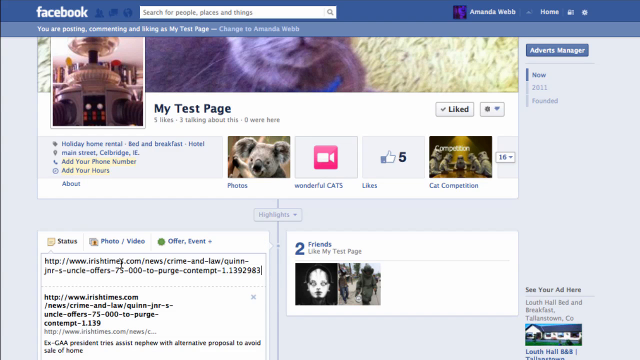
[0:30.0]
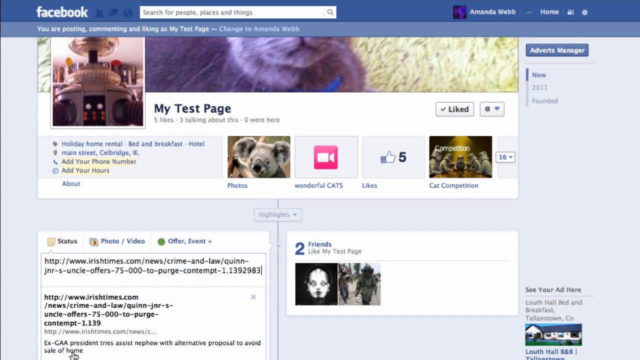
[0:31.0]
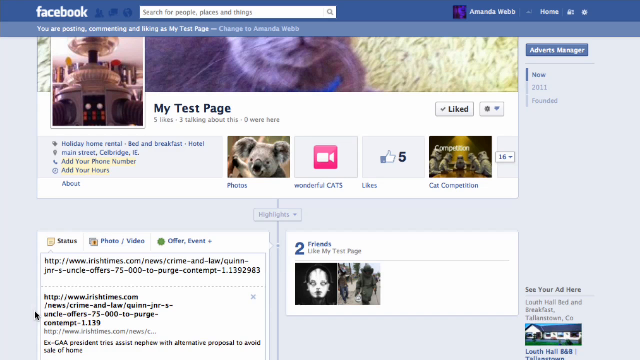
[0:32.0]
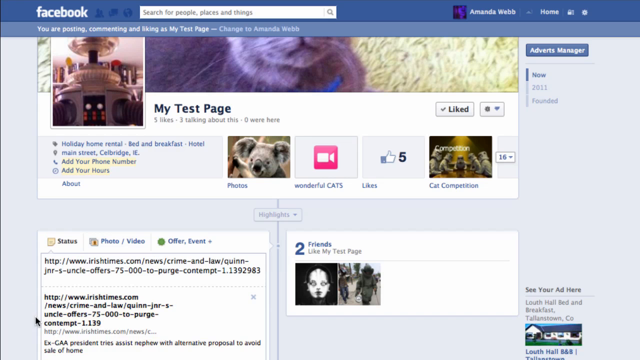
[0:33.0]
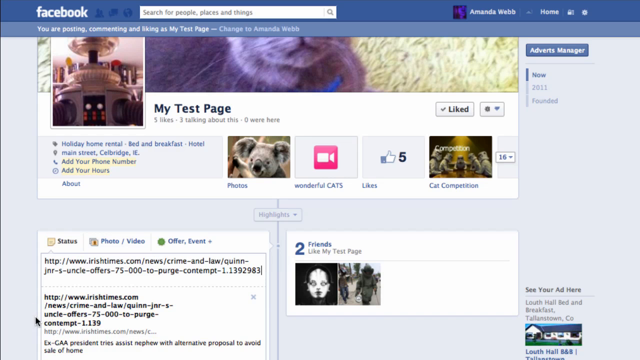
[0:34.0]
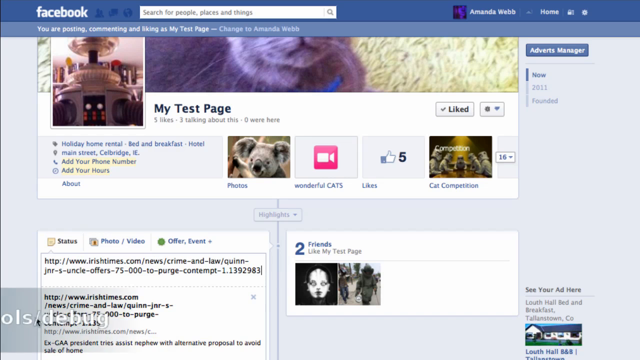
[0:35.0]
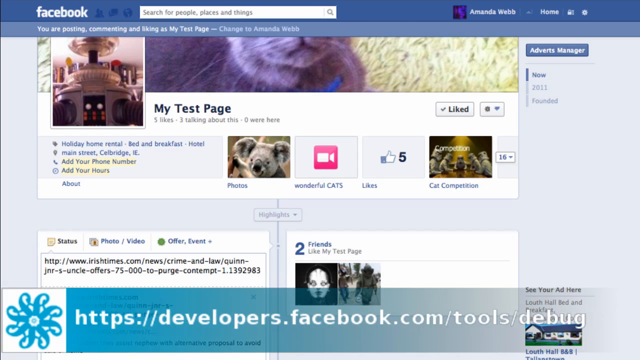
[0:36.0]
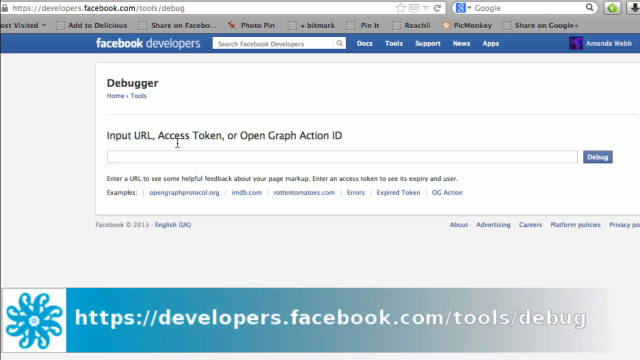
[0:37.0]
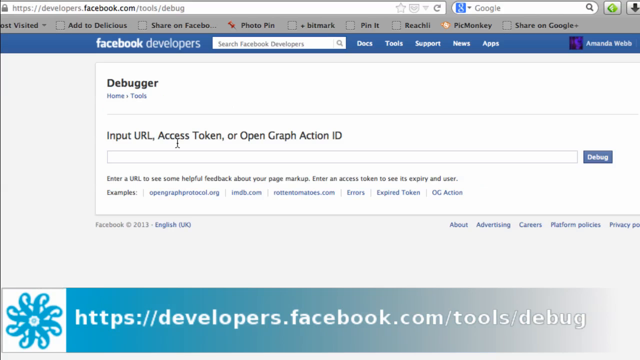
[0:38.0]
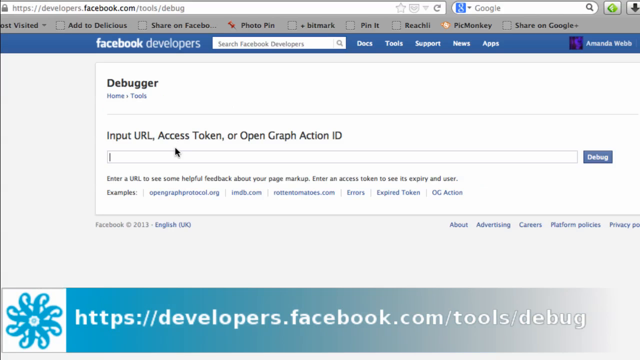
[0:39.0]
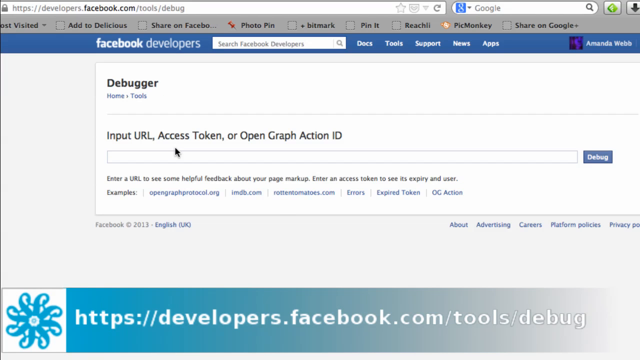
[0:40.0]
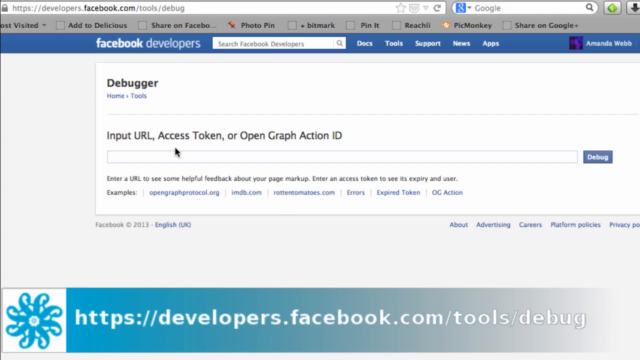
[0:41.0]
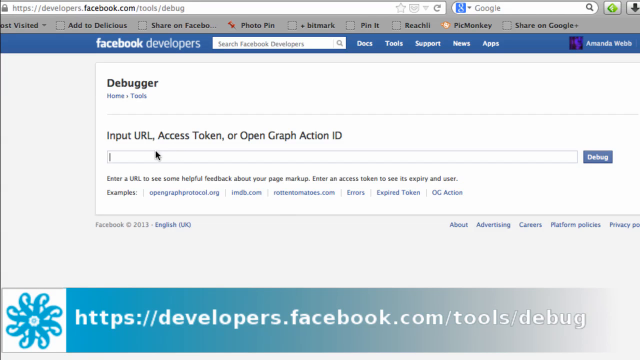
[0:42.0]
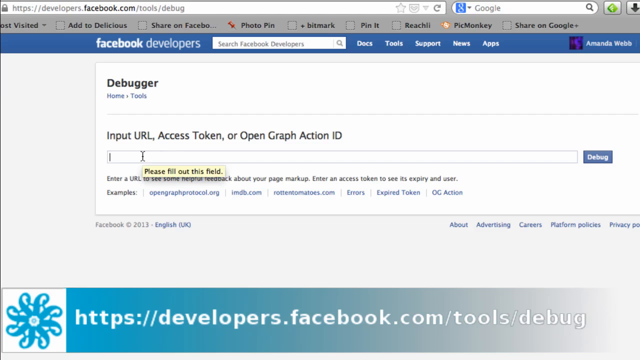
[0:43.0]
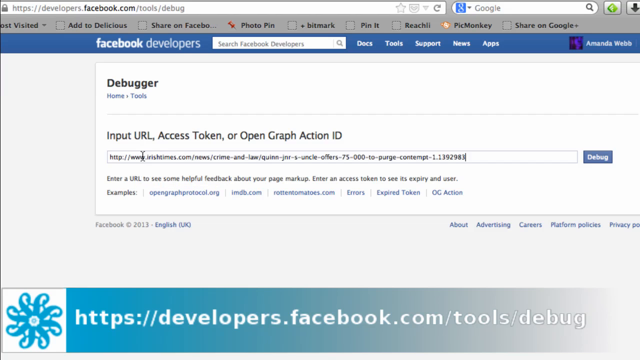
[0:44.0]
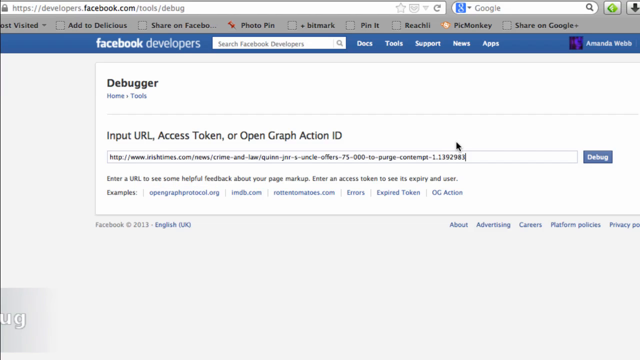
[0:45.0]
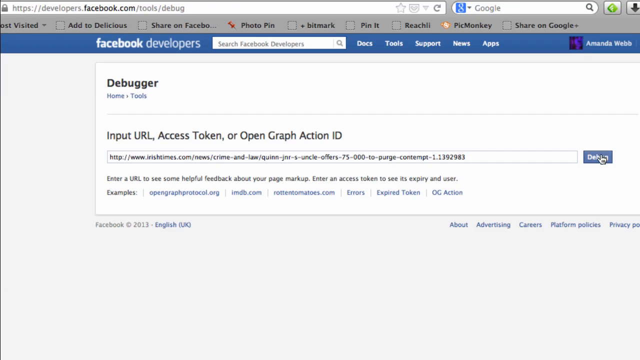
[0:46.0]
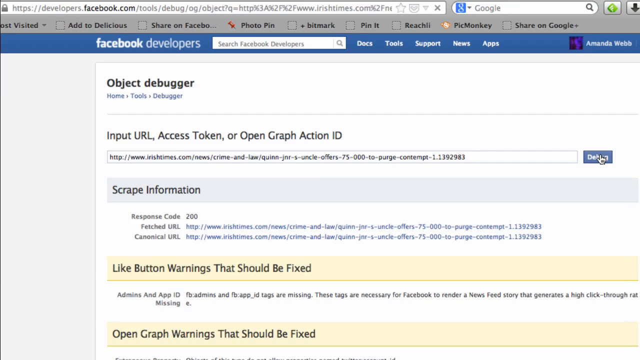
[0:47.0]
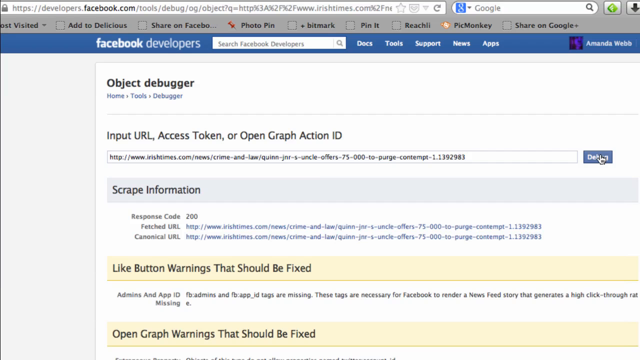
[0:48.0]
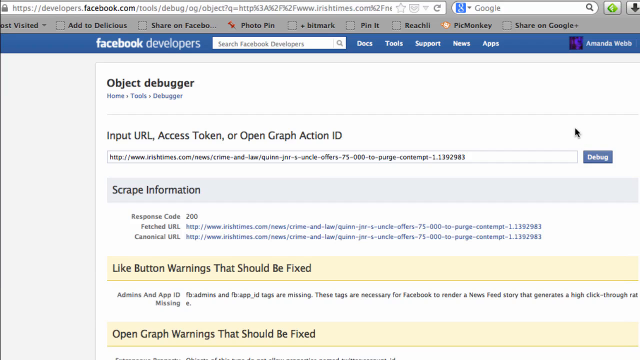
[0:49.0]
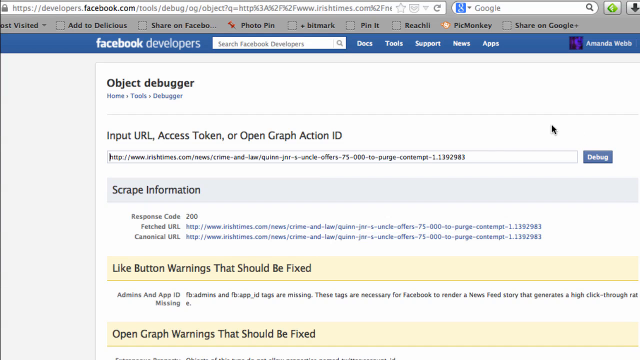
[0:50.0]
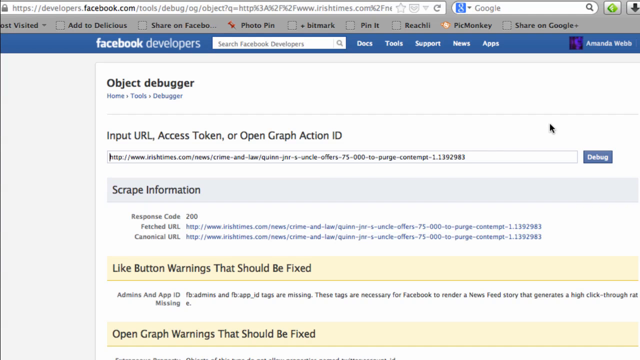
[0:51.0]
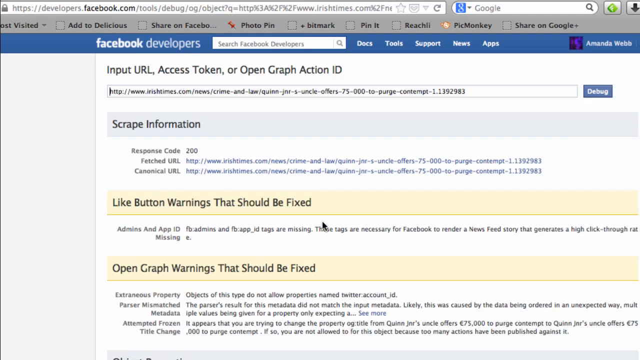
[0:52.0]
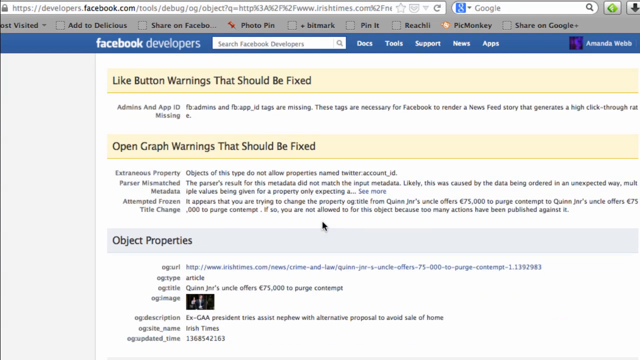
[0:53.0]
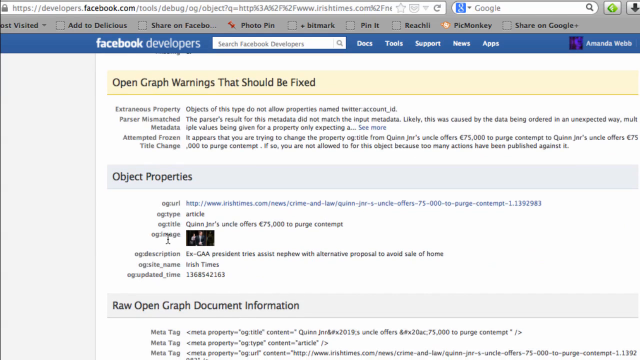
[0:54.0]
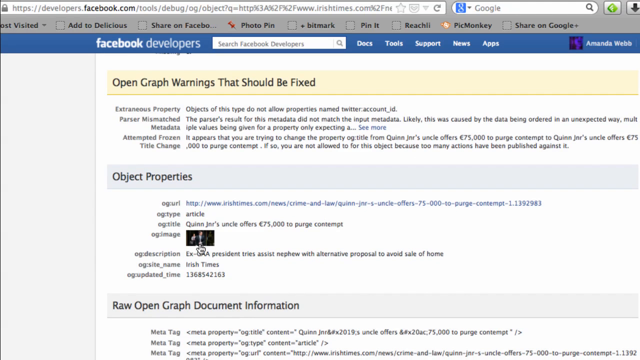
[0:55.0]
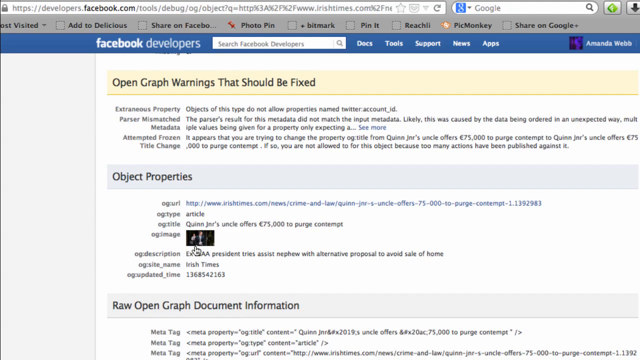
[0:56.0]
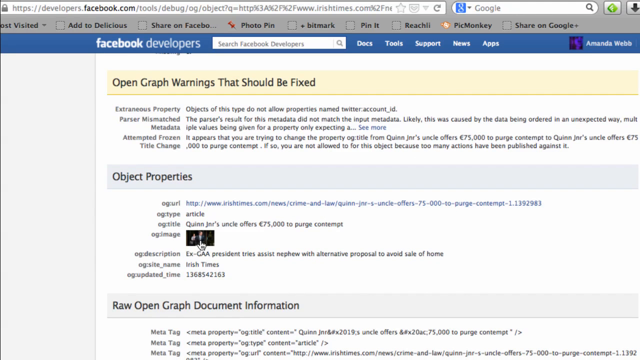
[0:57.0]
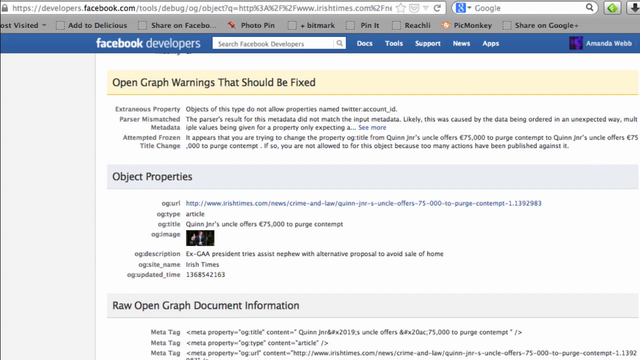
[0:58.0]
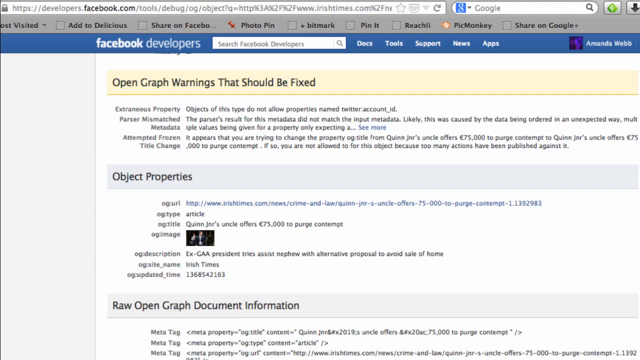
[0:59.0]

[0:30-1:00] A test page shows the address "https://developers.facebook.com-tools-debug". Sections on it include "open graph warnings that should be fixed", "object properties", "raw open graph document information" and "objects of this type do not follow properties", along with Twitter accounts, and further down "status of photo video of an event". The mouse points at a person wearing a suit. An Irish Times page shows the menu items "news", "sports", "business", "crime", "law" and "world", and a headline about an offer of £75,000. Text for Spiderworking.com reads "helping small businesses use social media using big businesses' knowledge". An Irish Times crime and law item is also visible.